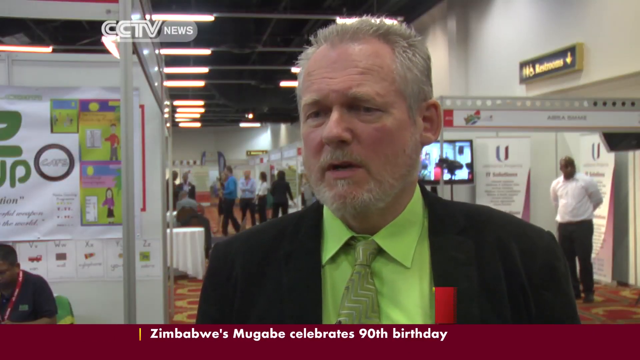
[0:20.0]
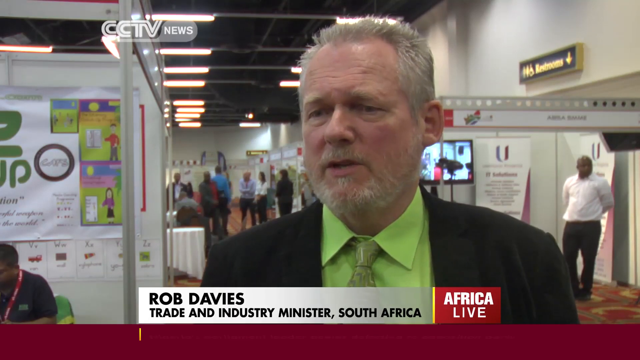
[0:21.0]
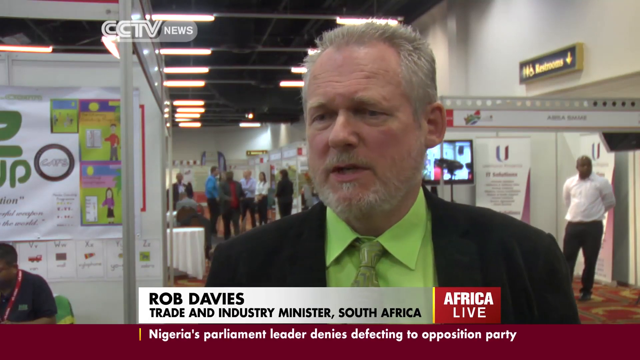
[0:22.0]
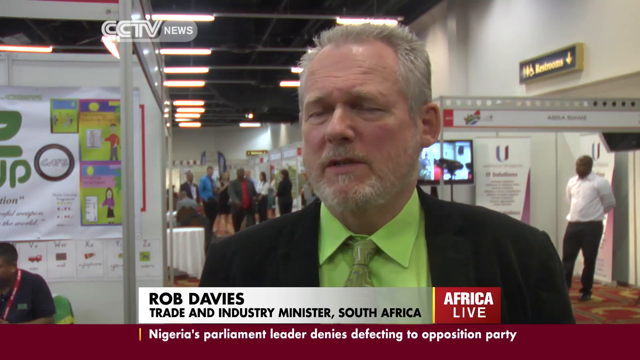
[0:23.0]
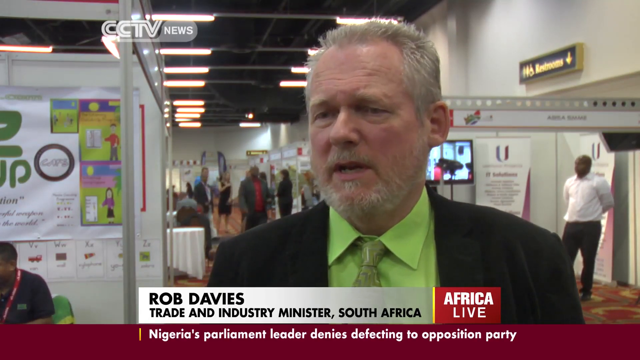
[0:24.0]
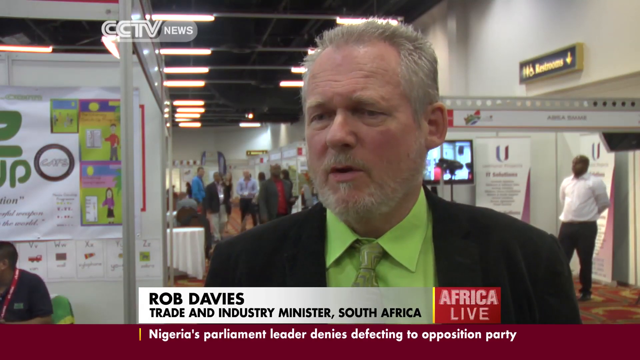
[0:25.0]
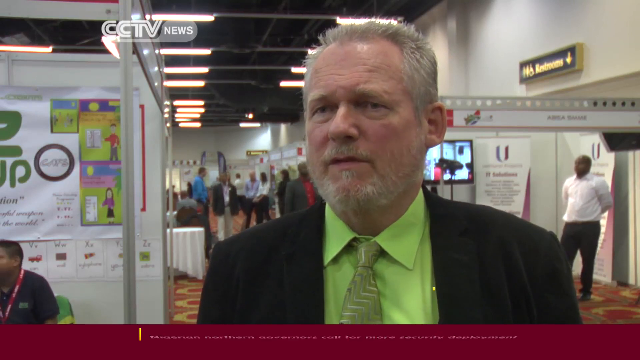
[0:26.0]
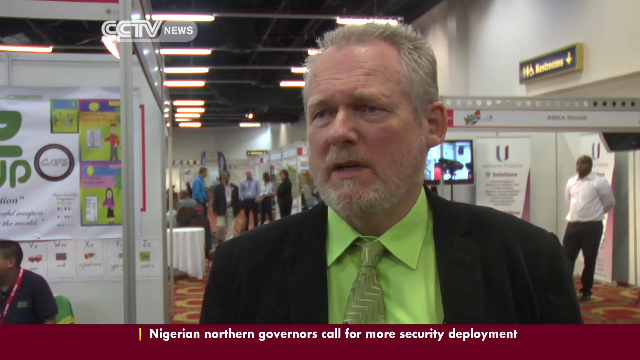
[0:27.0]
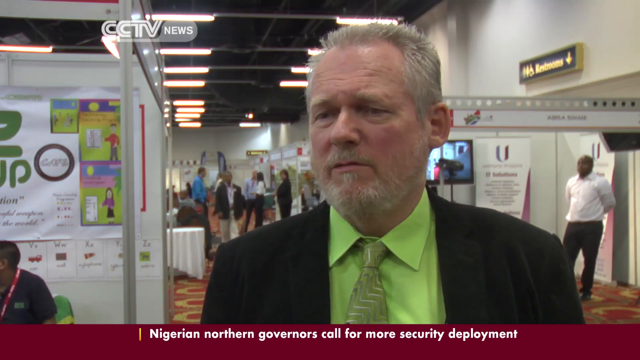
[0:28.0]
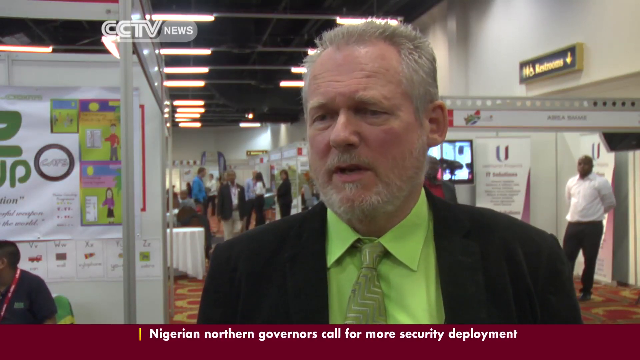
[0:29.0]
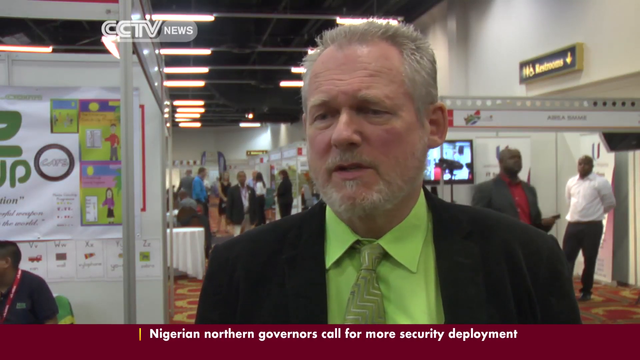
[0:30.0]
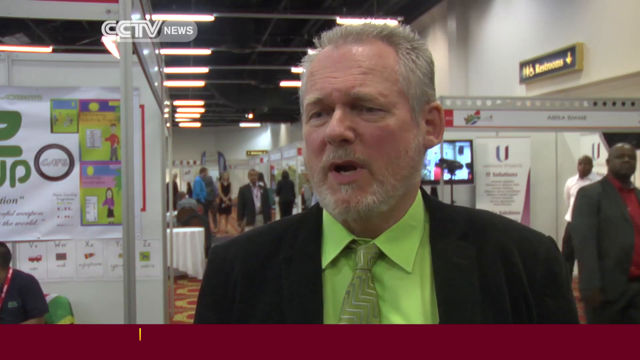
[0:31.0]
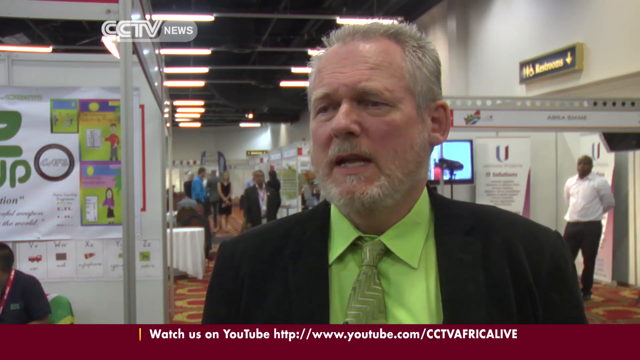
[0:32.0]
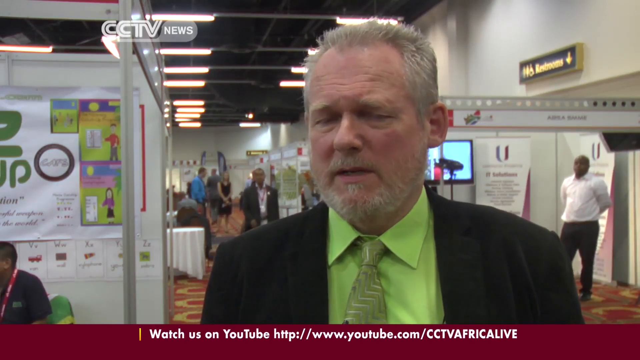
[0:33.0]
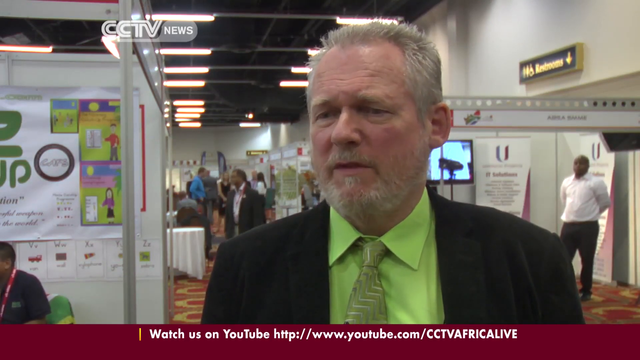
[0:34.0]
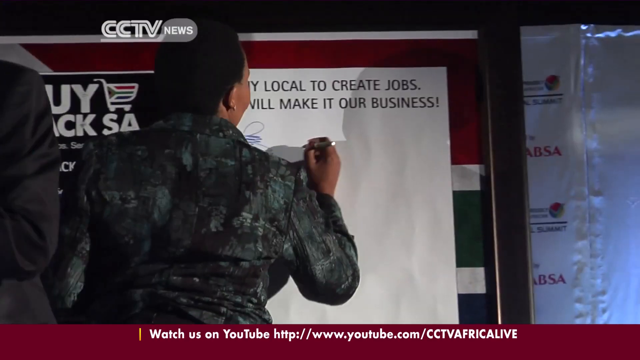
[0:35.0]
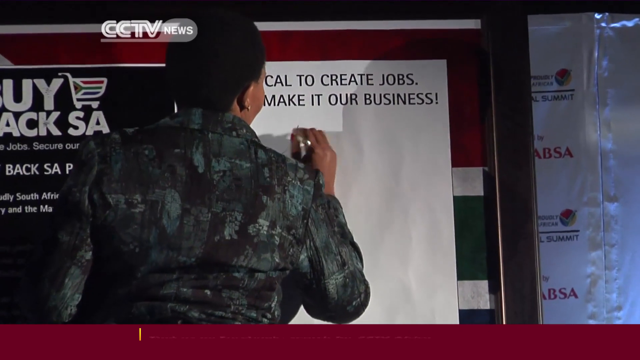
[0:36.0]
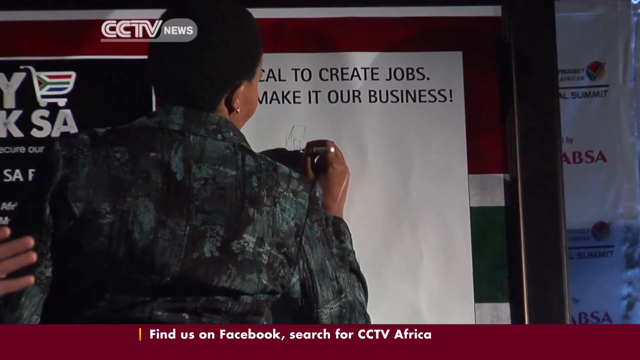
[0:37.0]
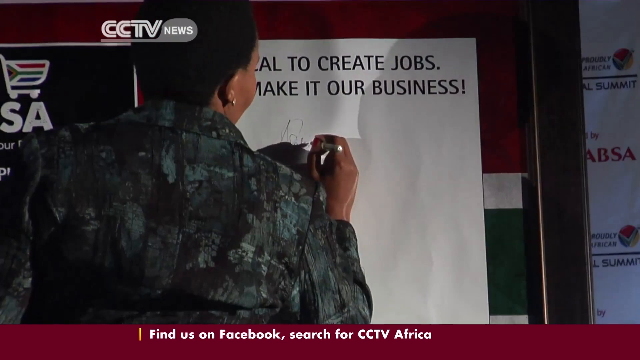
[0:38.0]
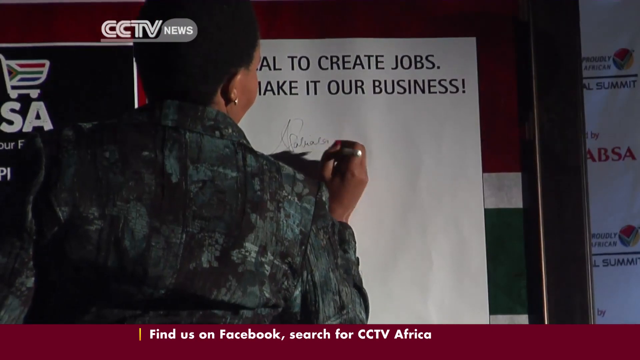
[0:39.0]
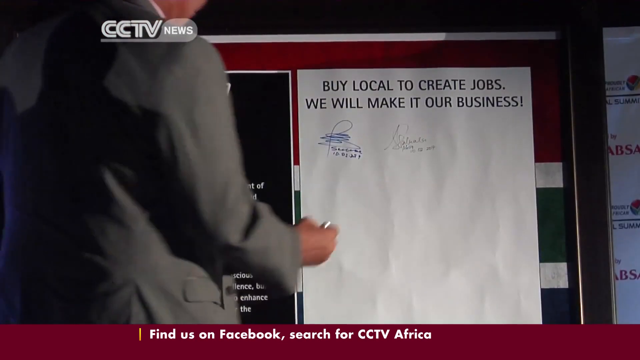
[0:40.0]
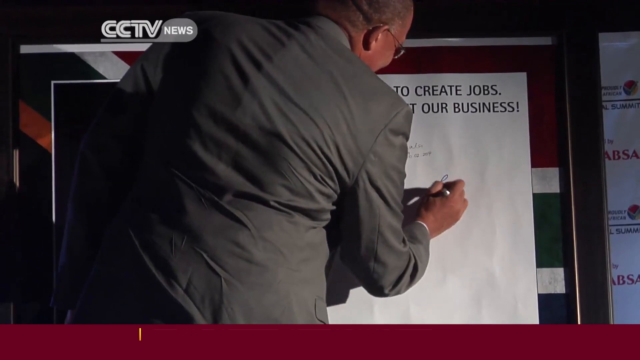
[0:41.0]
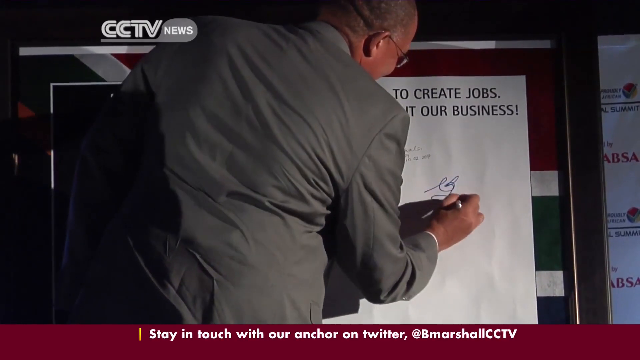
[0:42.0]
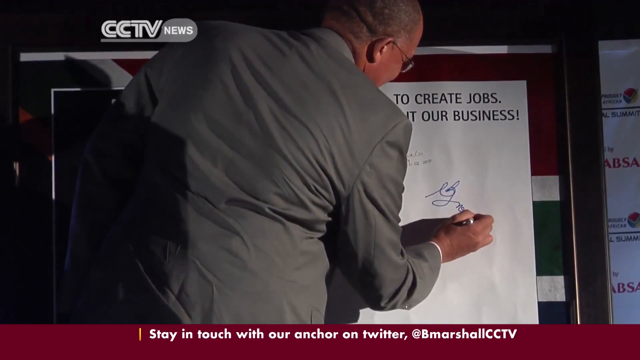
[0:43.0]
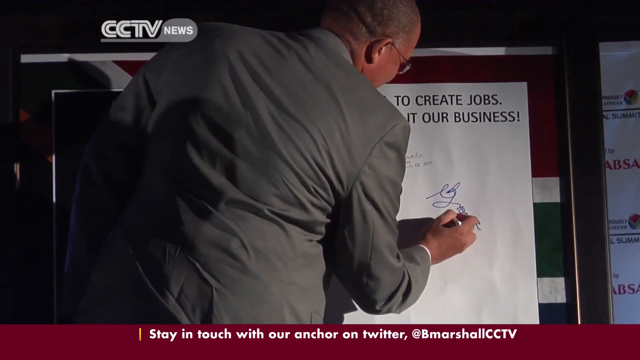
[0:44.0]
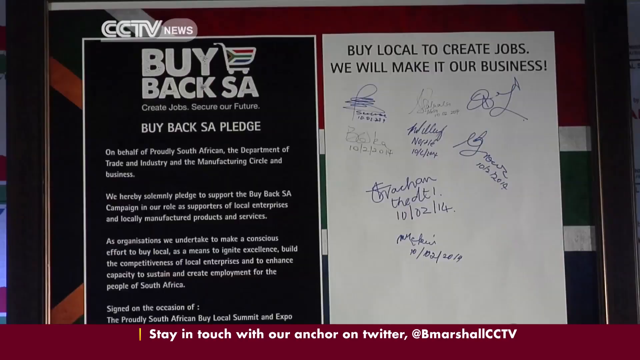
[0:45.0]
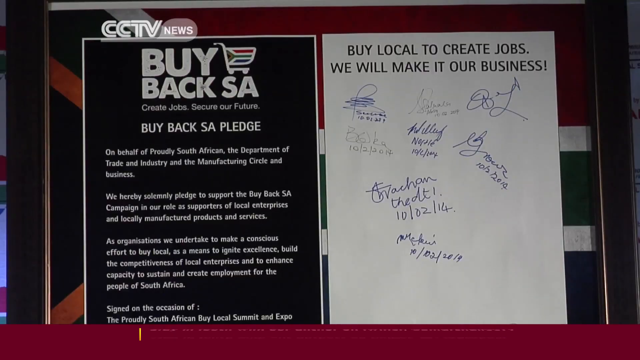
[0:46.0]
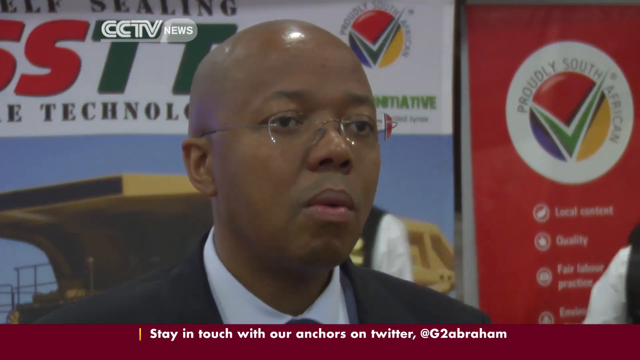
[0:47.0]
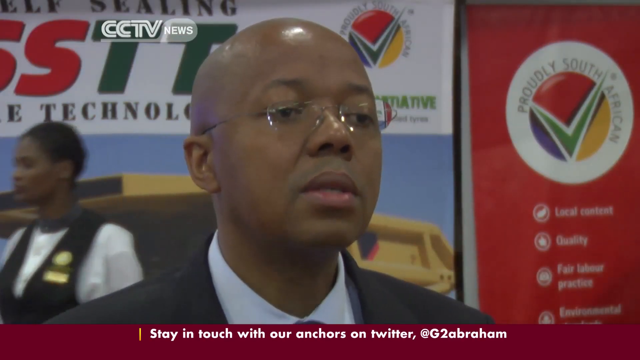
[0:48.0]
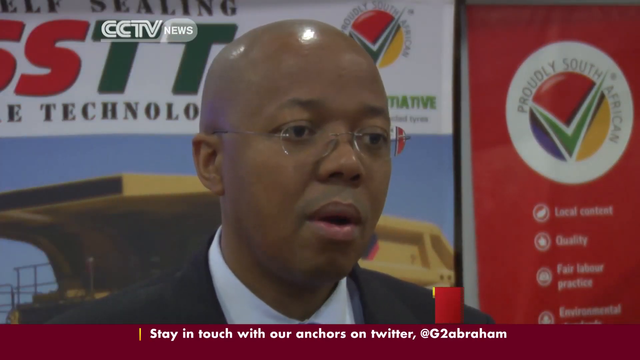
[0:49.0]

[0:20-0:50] Many people are set up in little booths behind the man at what seems to be some type of auction or convention. He is Rob Davies, the trade and industry minister of South Africa. On-screen text reads "Africa live." There is a bathroom behind them, and an African American man is standing, apparently close to the bathroom. A woman writes on a white board, and people are signing their signatures with the dates, possibly for a petition. The board reads "by local to create jobs" and "we will make it our business," and further text reads "create jobs, secure a future" along with a pledge. The scene then jumps to an unidentified African American man with glasses talking.